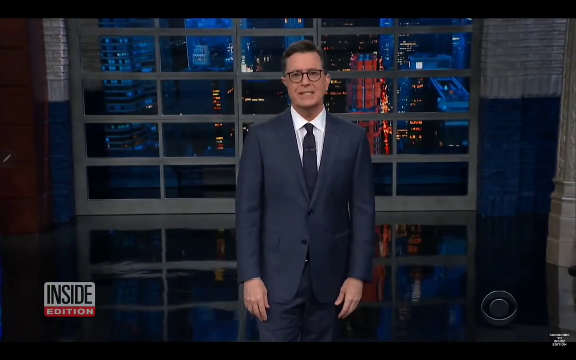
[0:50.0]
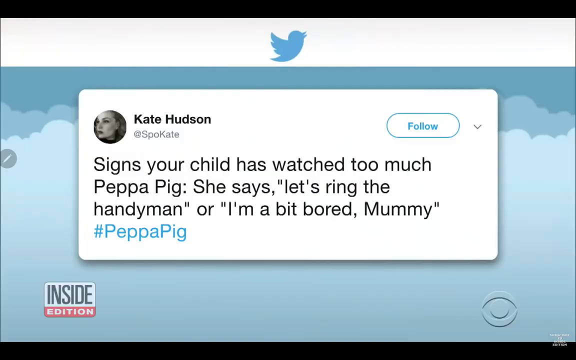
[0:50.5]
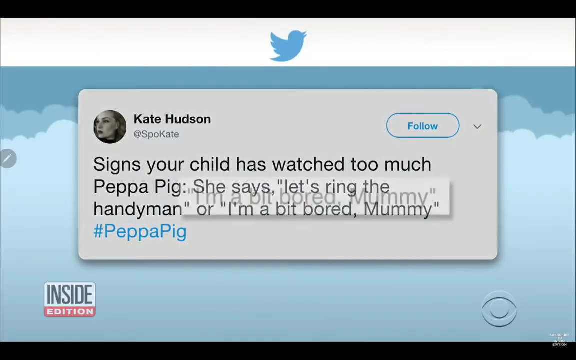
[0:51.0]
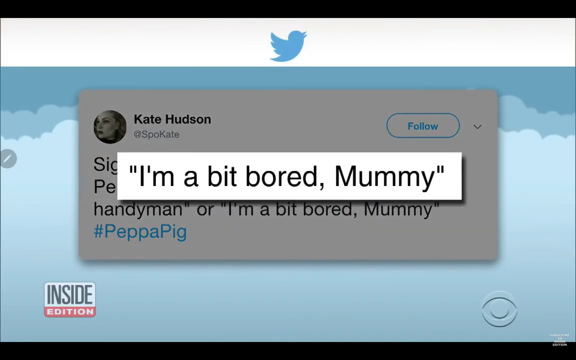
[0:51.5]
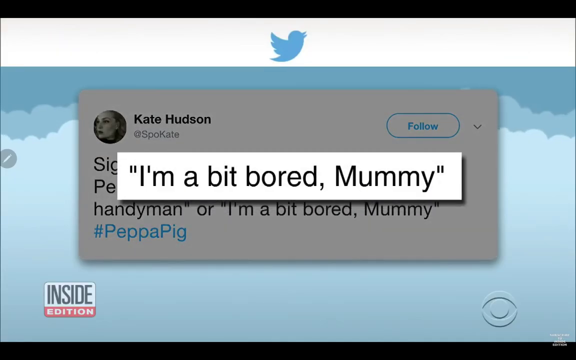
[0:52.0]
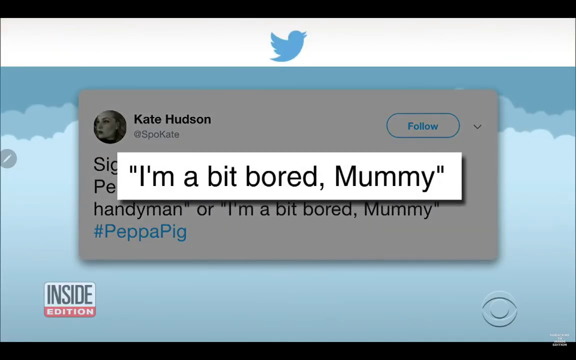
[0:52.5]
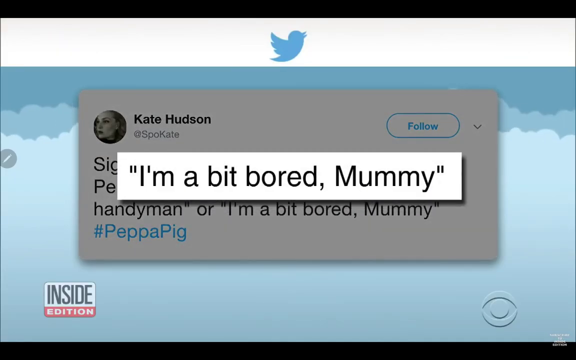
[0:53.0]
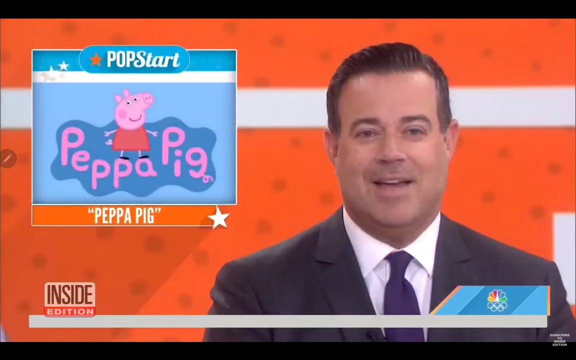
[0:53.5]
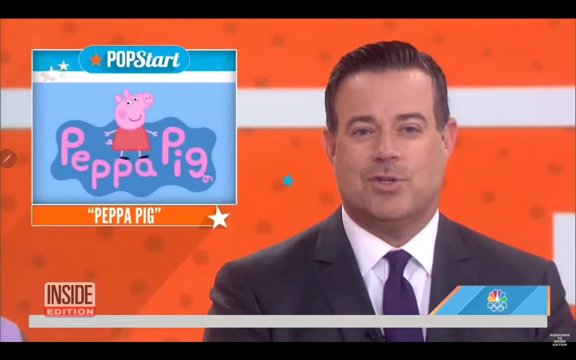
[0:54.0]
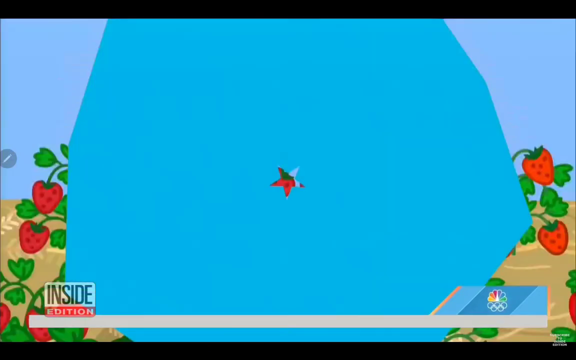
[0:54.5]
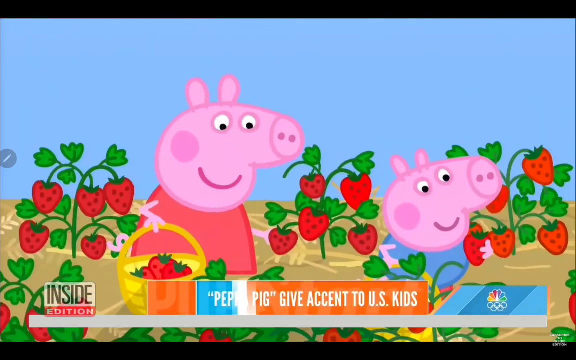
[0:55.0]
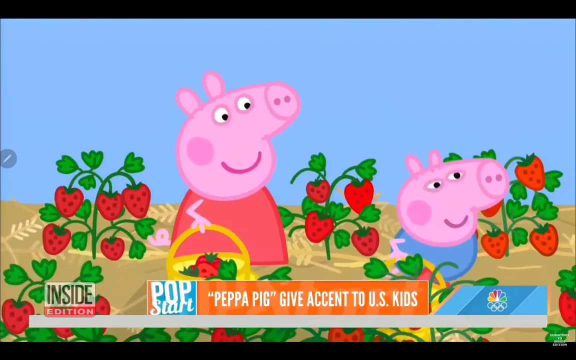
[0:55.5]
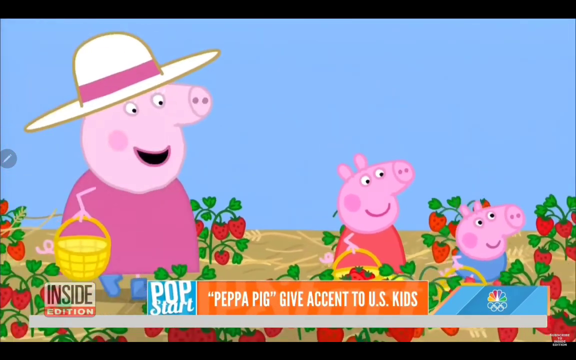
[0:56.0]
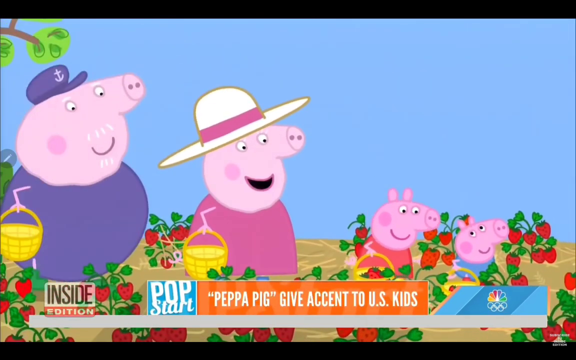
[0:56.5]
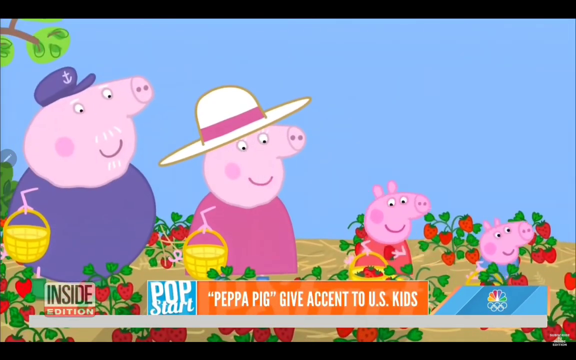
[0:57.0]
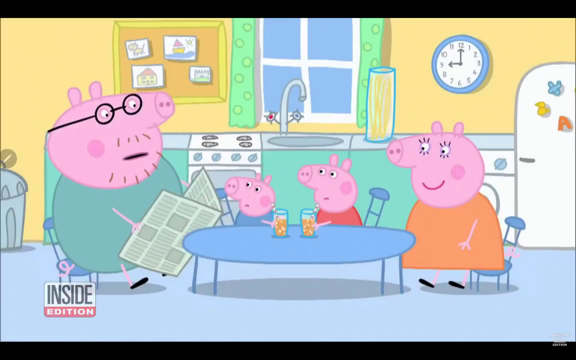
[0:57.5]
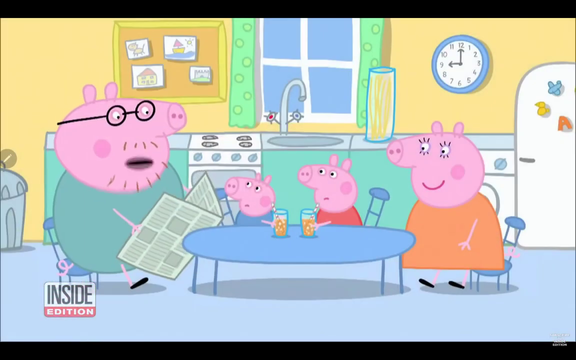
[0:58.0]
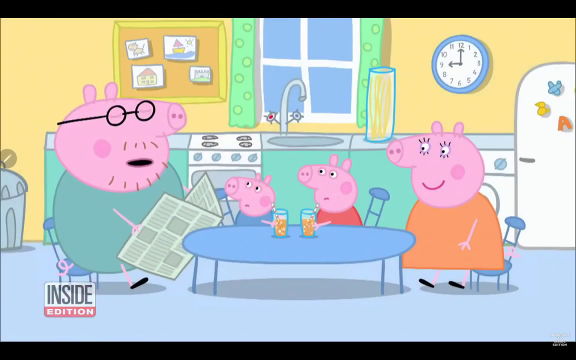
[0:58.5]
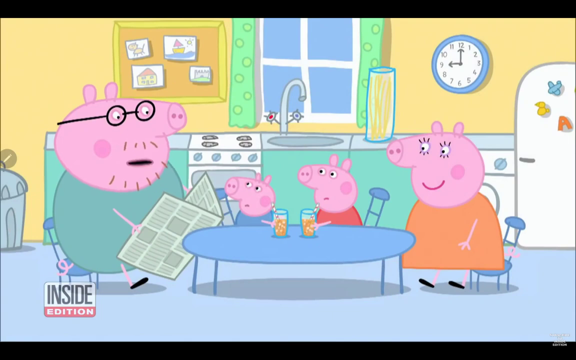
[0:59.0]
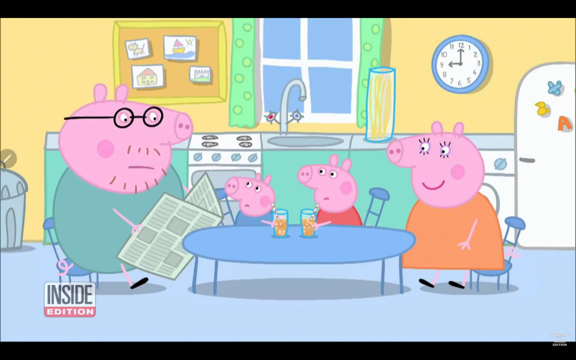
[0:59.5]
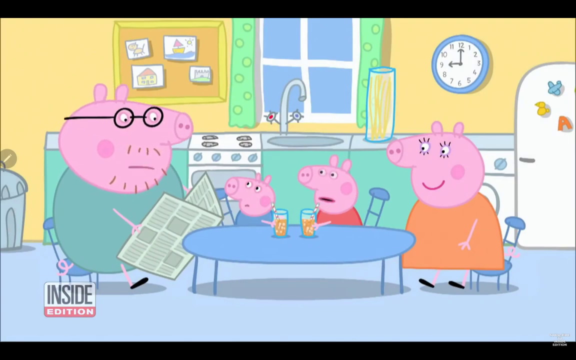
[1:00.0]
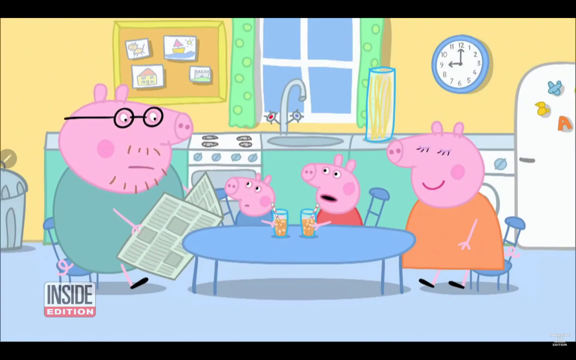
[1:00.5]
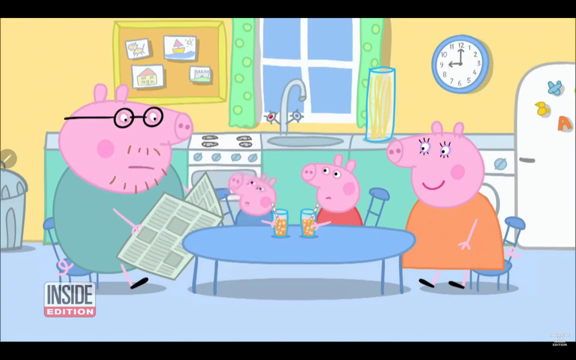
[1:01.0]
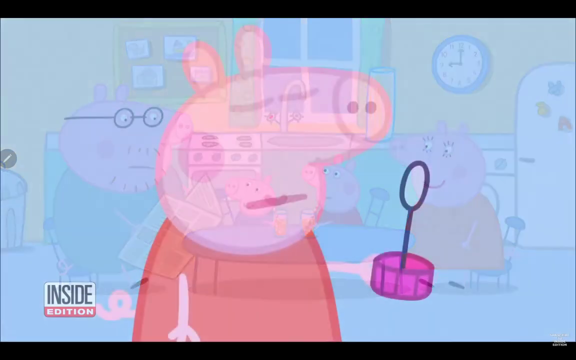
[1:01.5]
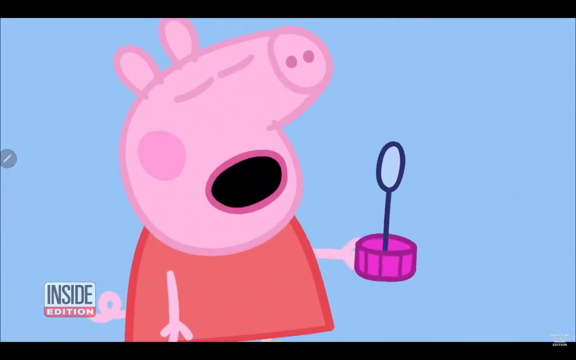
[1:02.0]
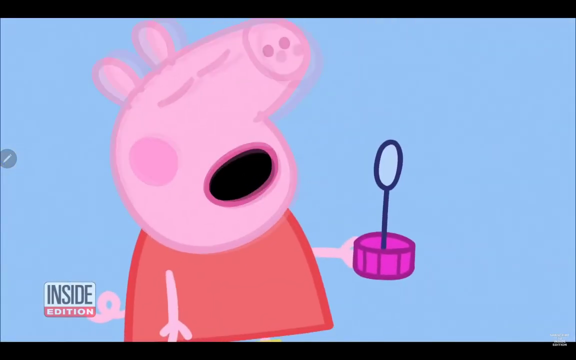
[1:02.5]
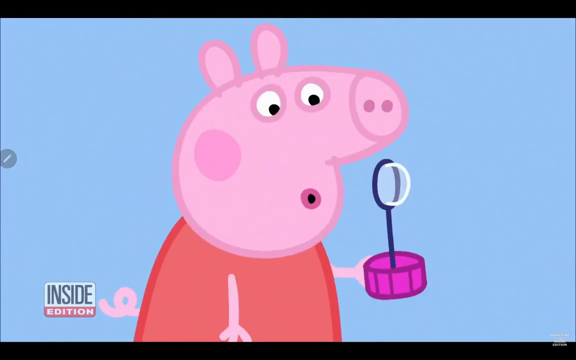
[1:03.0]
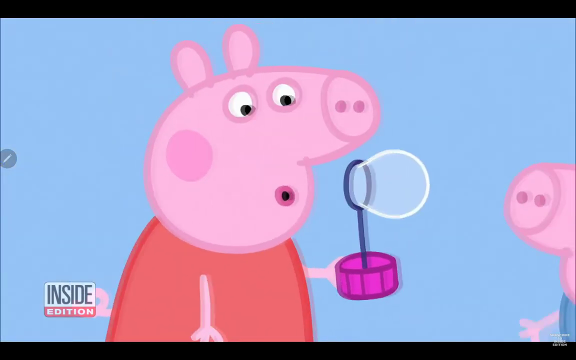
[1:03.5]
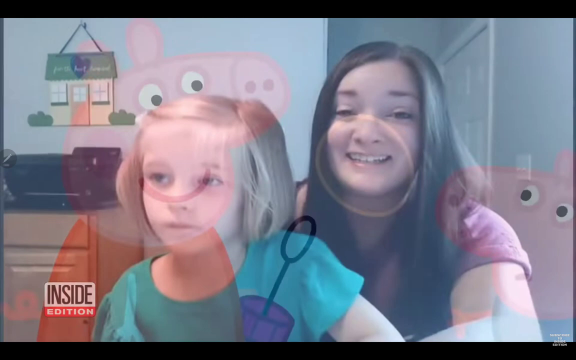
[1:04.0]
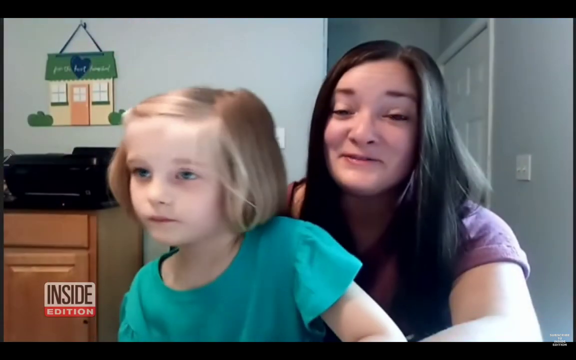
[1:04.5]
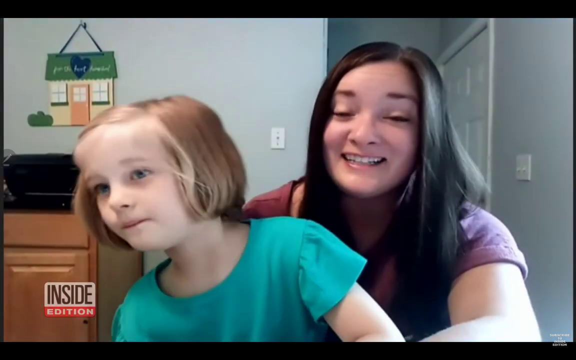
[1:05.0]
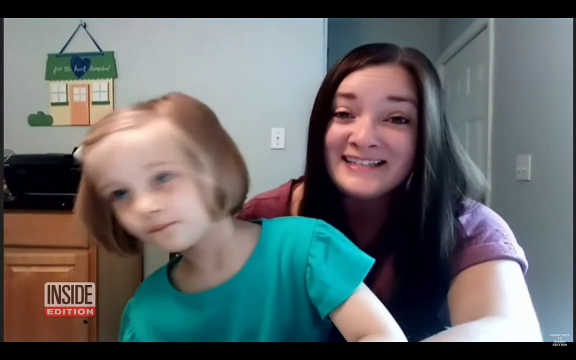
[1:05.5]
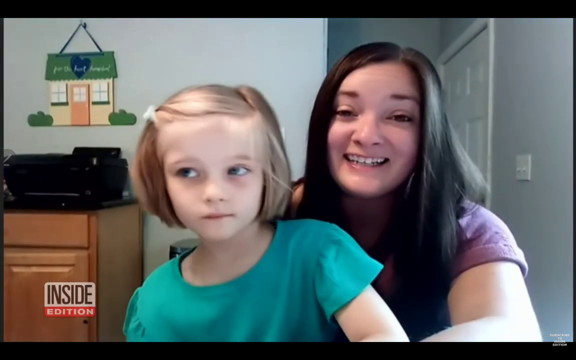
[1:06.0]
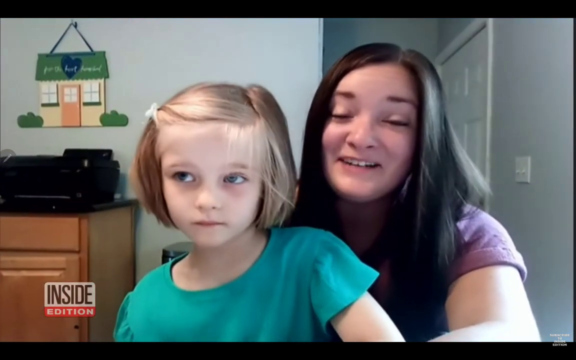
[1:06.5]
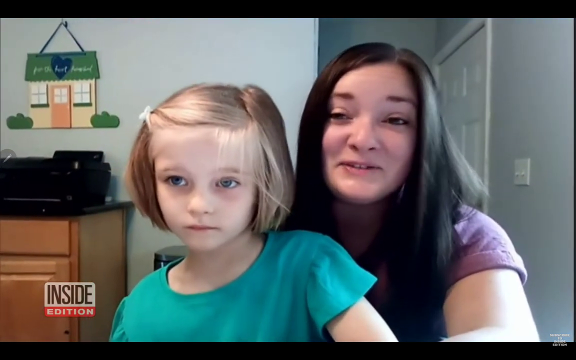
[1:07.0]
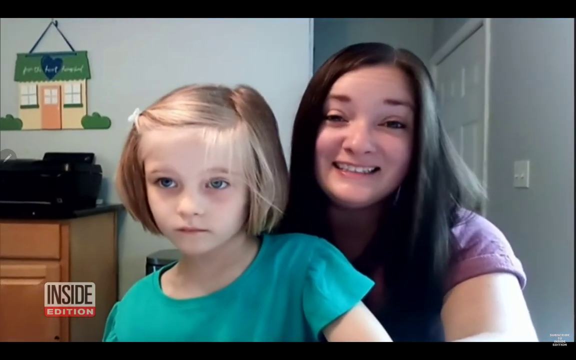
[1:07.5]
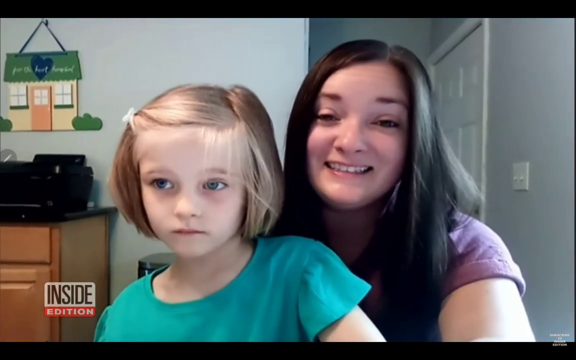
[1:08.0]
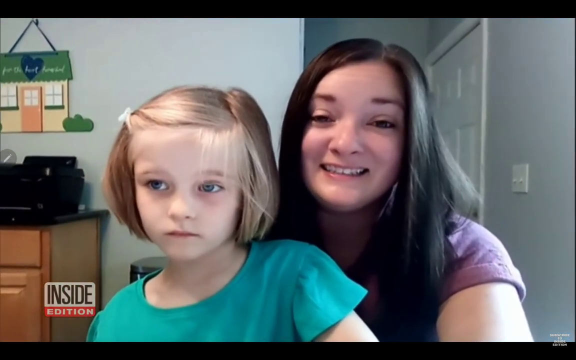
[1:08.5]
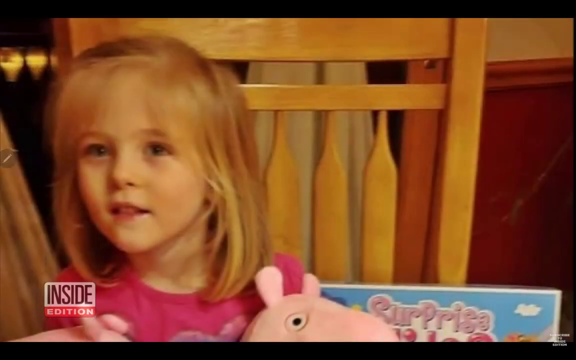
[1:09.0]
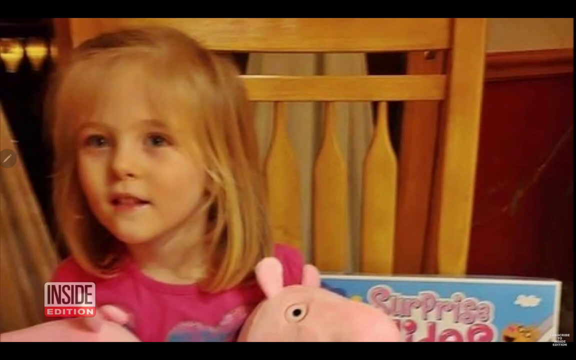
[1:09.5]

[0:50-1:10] The tweet by Kate Hudson appears on screen. It includes the words "your child has watched too much Peppa Pig", "let's ring the handyman" and "I'm a bit bored mummy", along with "#Peppa Pig". Clips of the Peppa Pig show continue, along with clips of kids talking, as part of an Inside Edition segment.